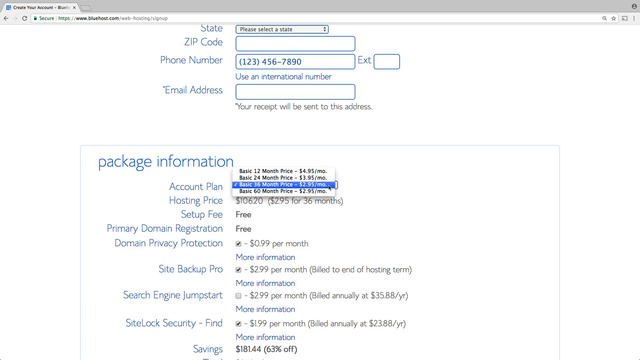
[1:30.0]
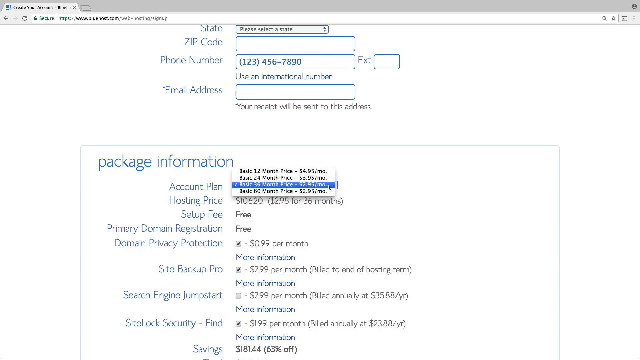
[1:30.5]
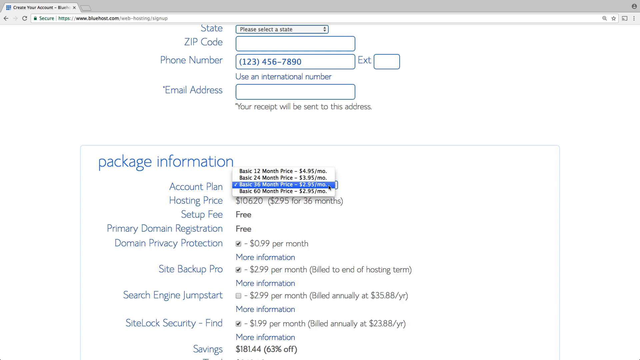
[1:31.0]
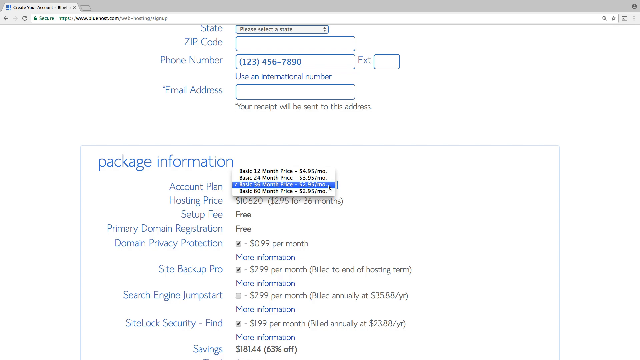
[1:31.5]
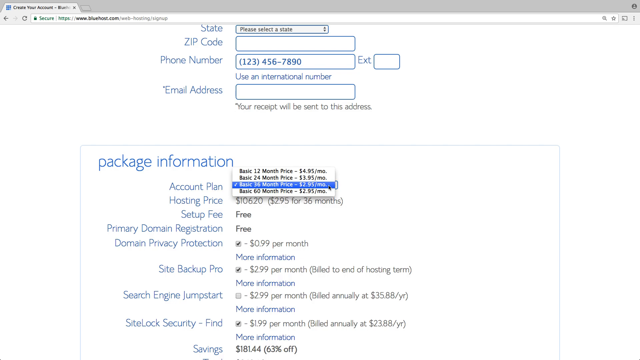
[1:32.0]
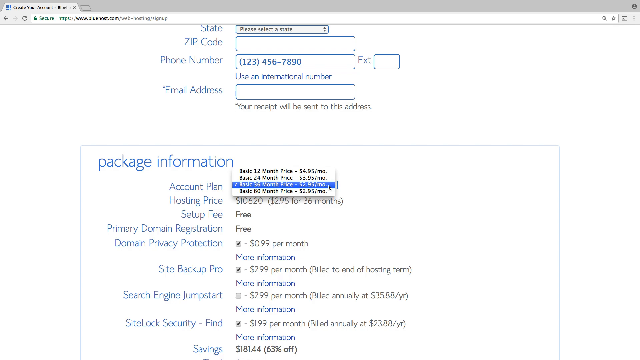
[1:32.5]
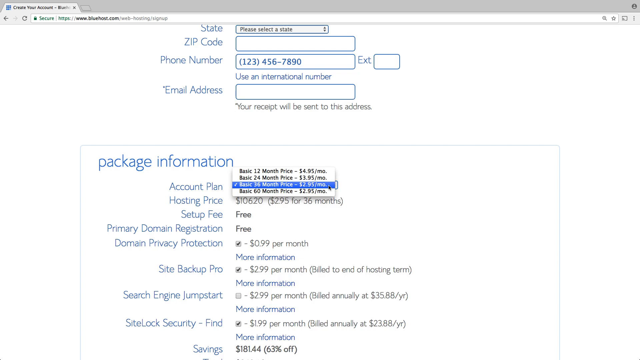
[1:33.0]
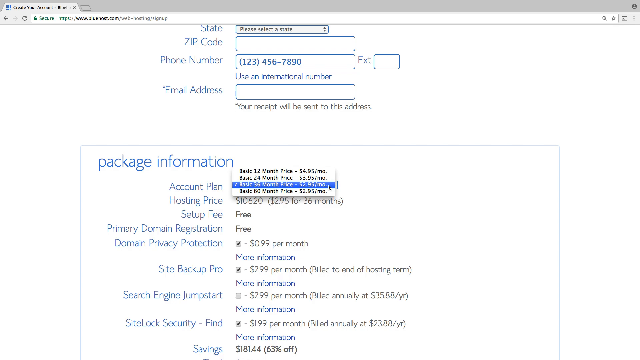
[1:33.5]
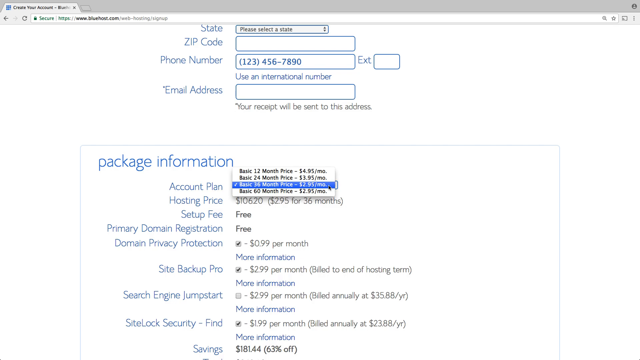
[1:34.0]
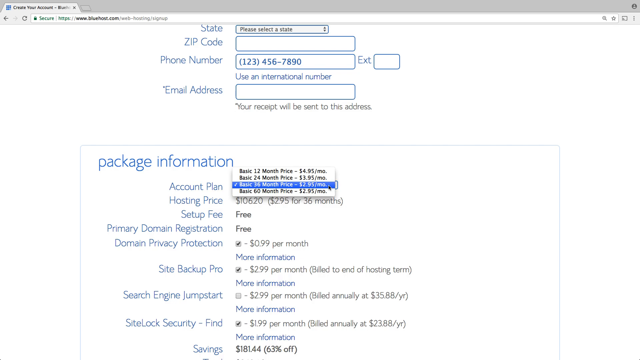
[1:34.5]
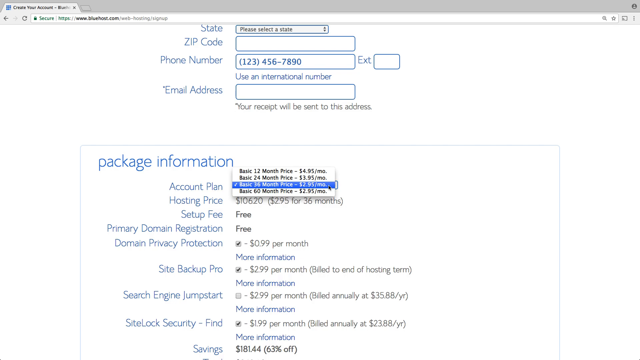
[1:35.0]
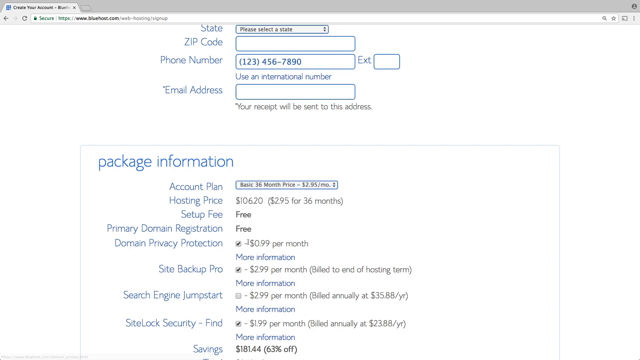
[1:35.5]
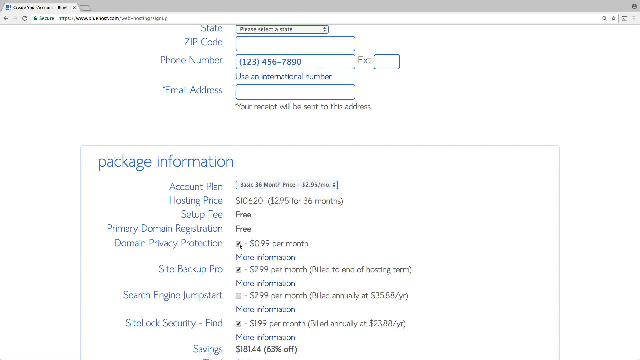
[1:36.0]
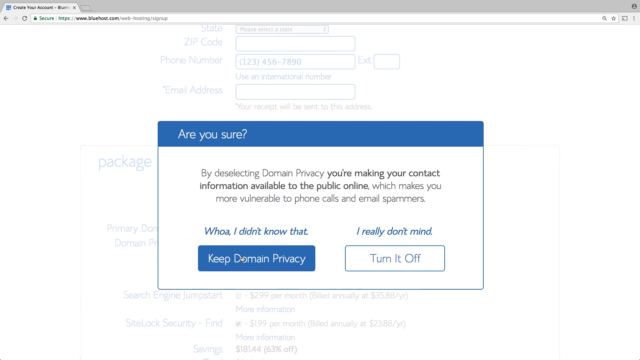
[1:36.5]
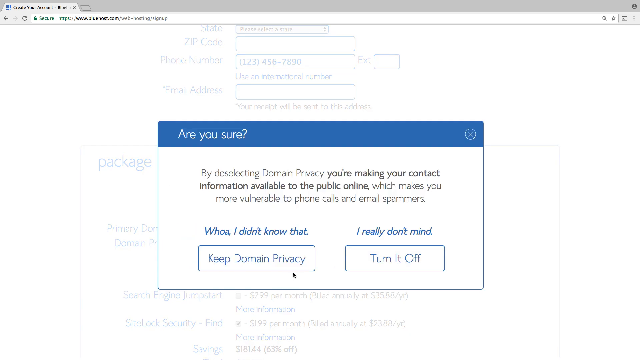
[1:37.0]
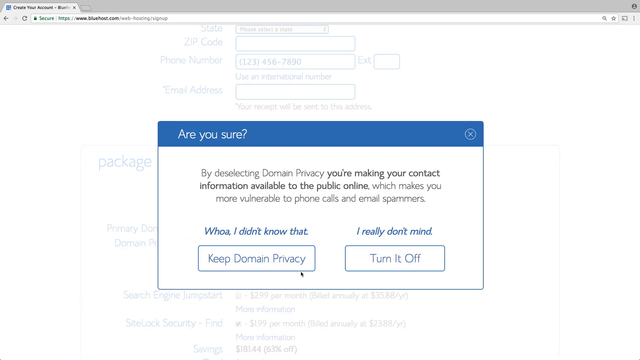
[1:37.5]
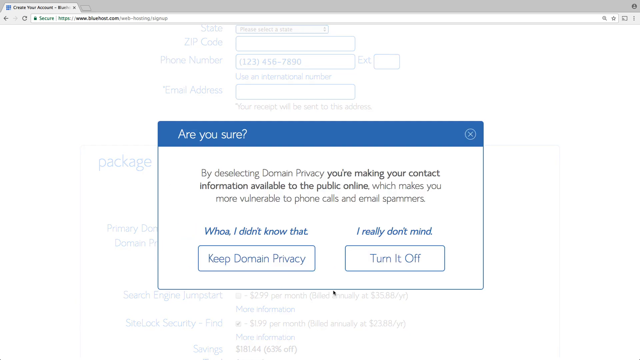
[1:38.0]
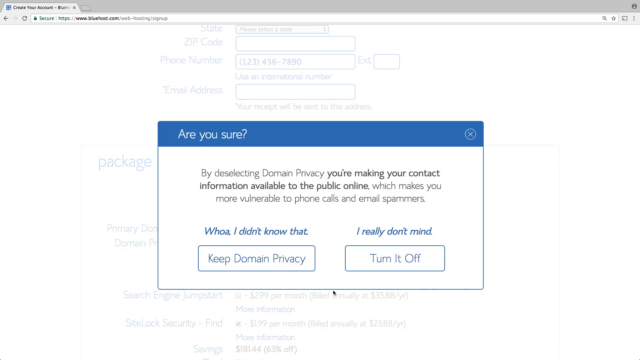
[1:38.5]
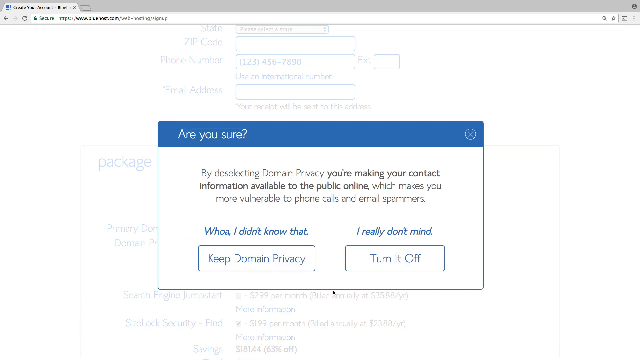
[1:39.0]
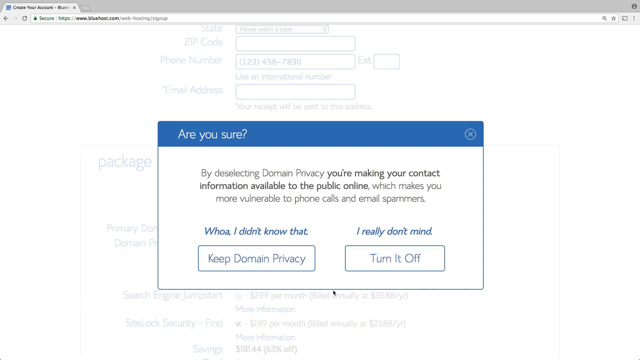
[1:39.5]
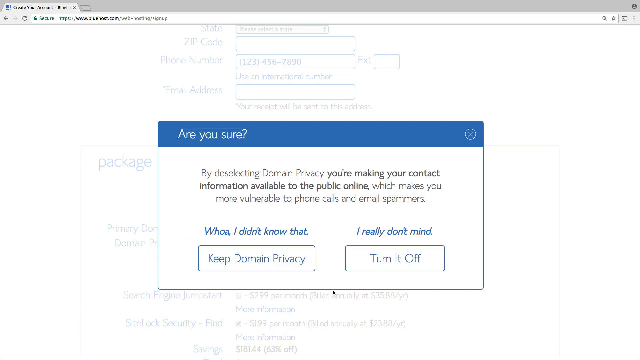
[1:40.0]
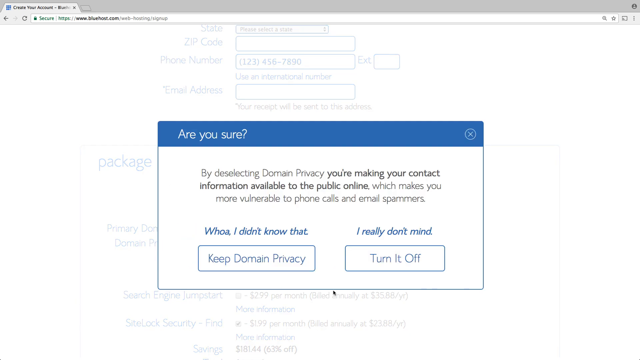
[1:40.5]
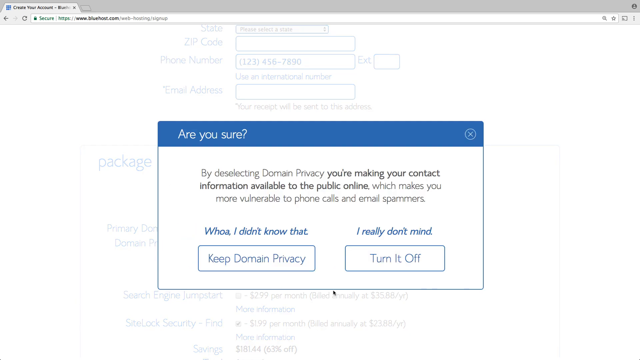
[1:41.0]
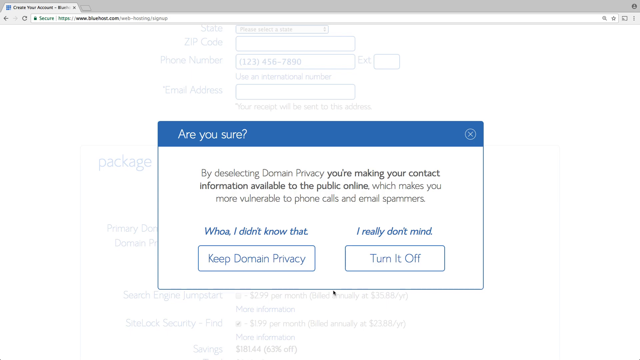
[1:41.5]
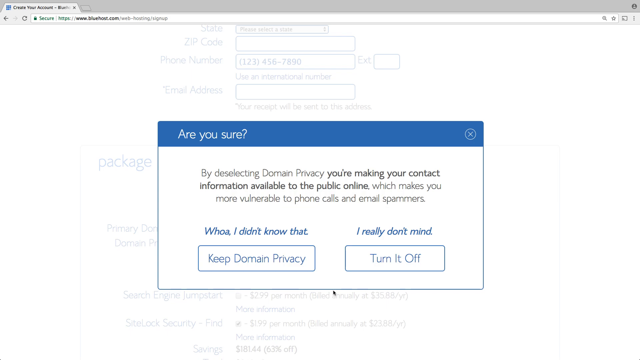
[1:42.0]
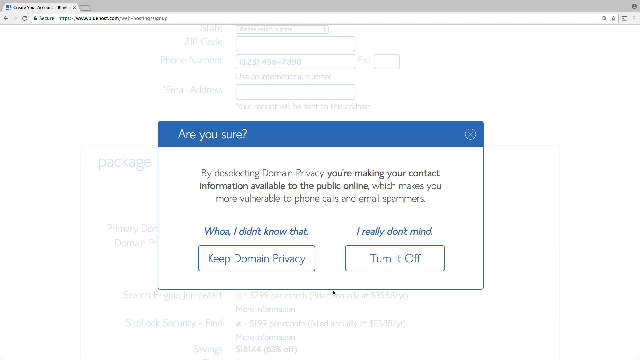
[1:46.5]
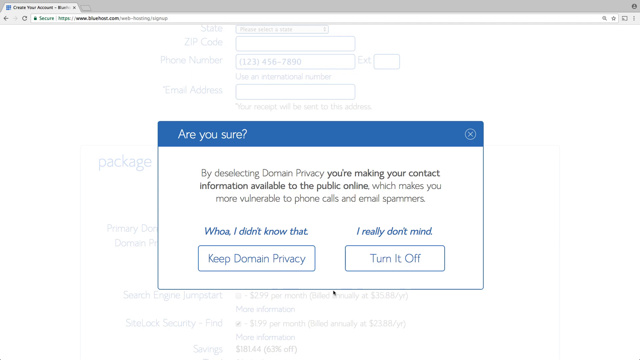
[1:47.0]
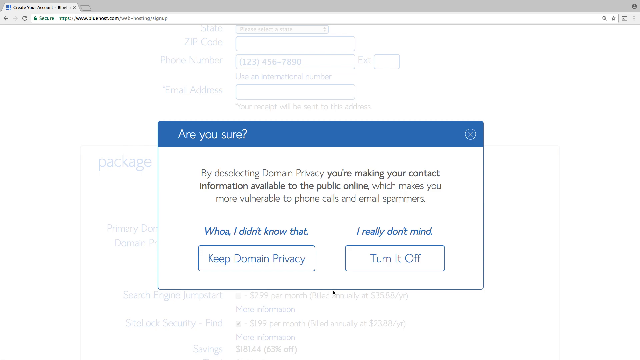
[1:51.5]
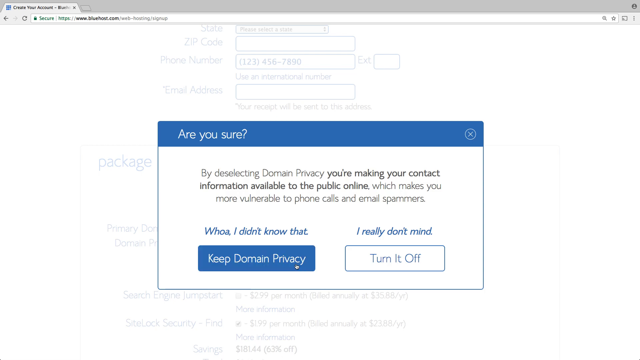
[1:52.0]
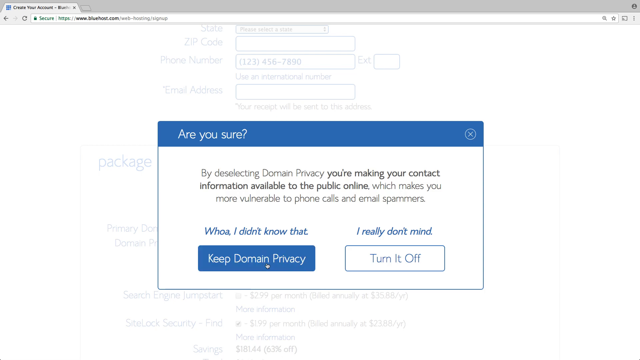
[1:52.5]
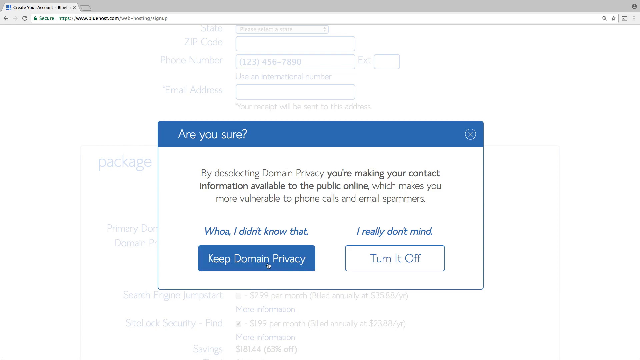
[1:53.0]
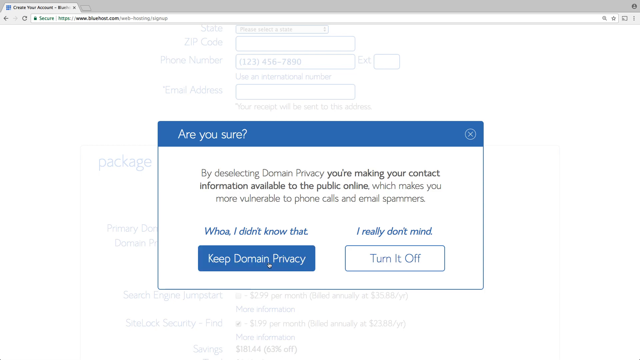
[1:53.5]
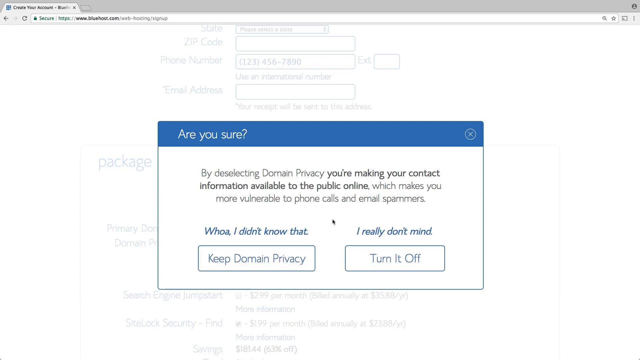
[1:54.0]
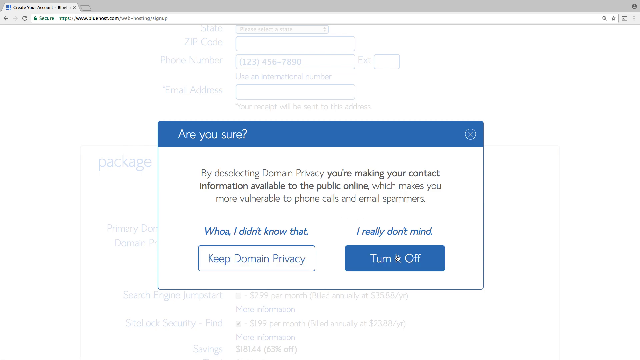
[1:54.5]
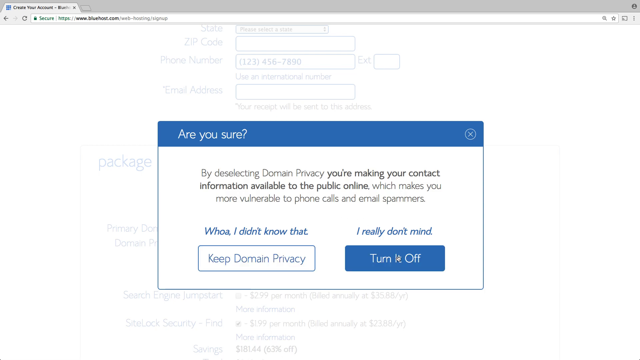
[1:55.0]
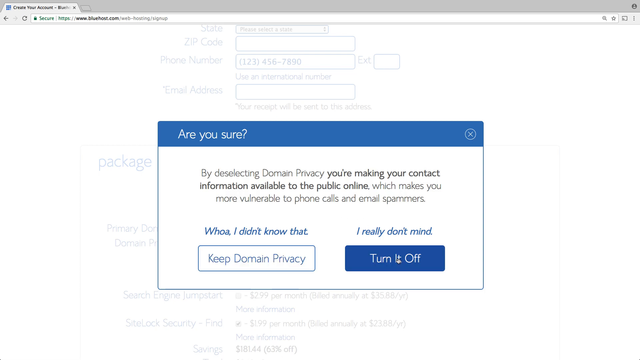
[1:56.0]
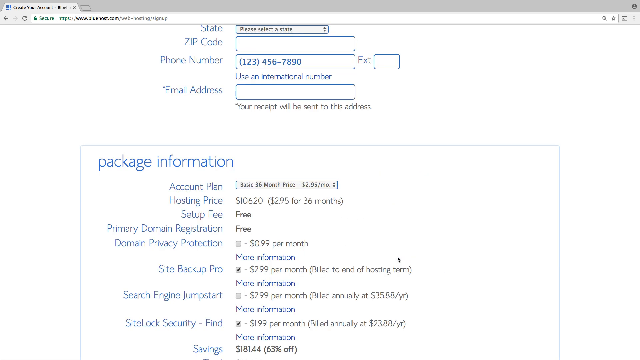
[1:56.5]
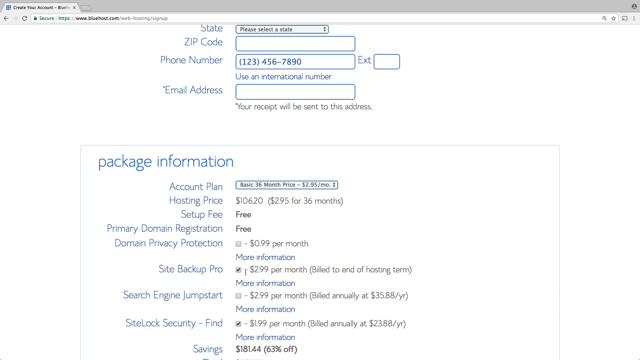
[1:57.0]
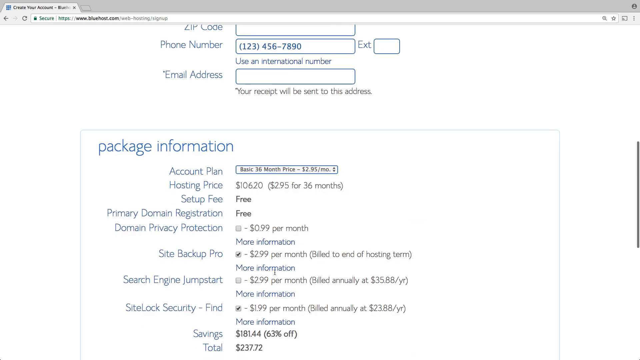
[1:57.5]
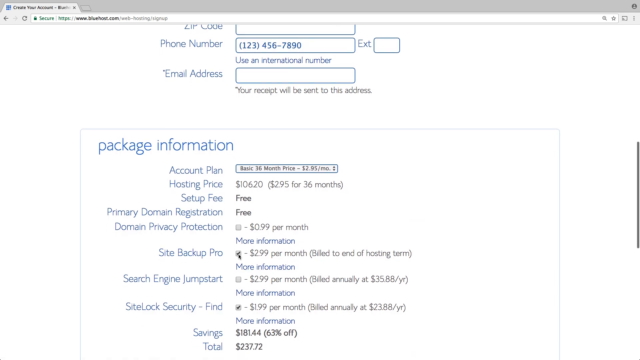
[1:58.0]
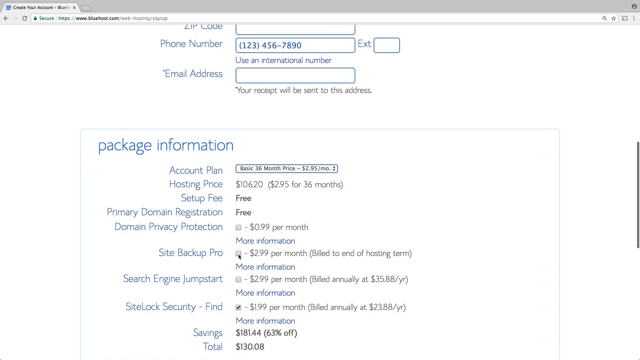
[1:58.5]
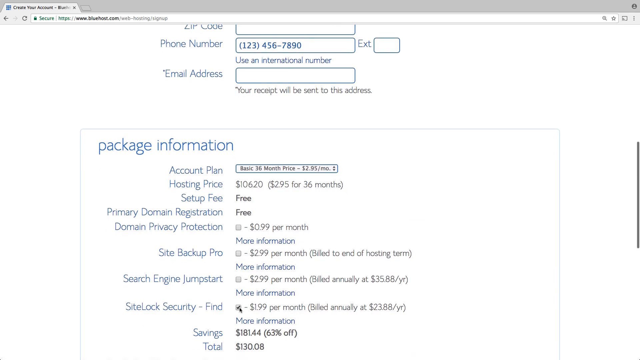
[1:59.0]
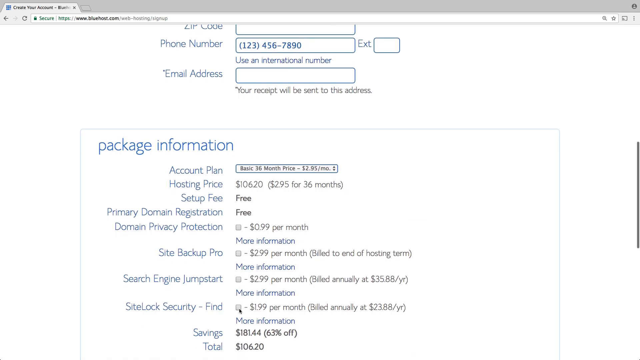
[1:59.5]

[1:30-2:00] Still on the details page, the user appears to be trying to deselect domain privacy. Two tabs show that domain privacy can be kept on or turned off entirely, and the user turns it off. The user looks at package information and makes basic changes to the chosen plan, seemingly fiddling with the controls and going back and forth with the privacy selections while the site kind of warns against turning it off.